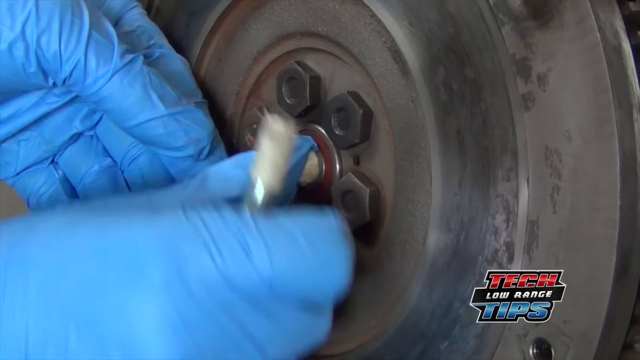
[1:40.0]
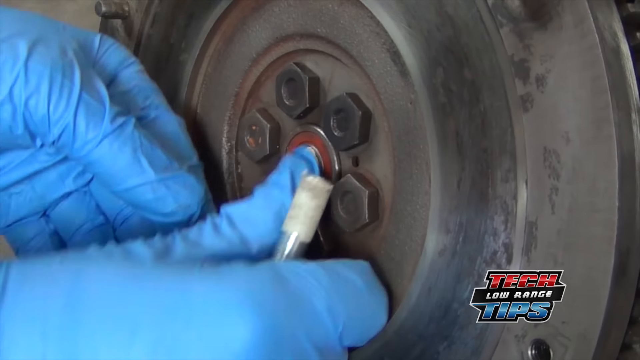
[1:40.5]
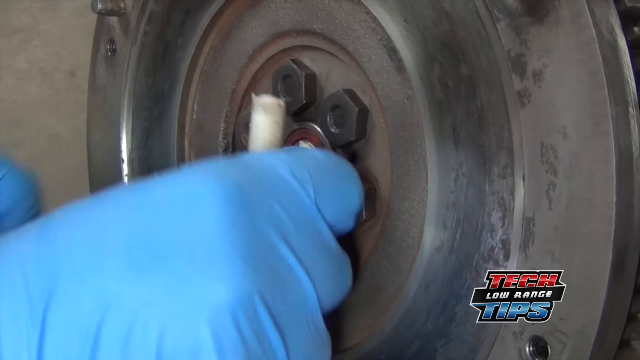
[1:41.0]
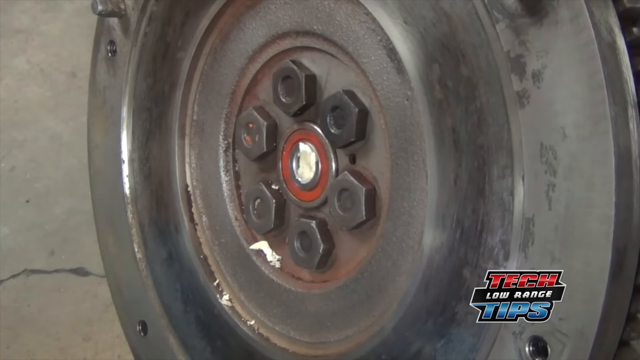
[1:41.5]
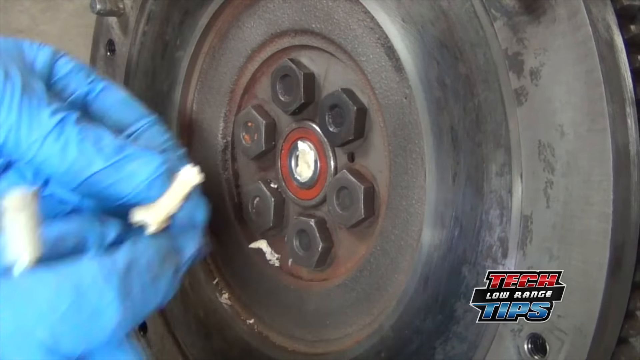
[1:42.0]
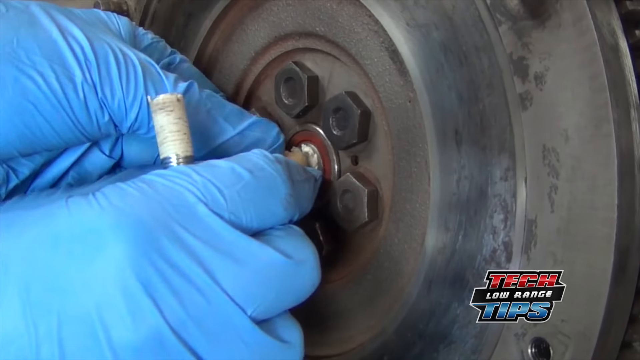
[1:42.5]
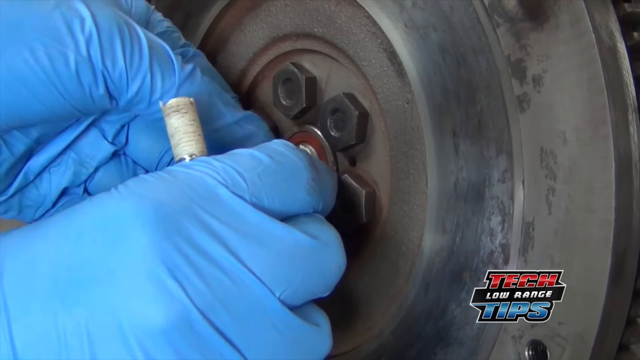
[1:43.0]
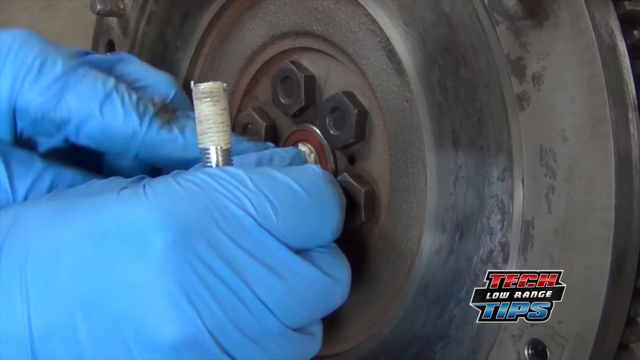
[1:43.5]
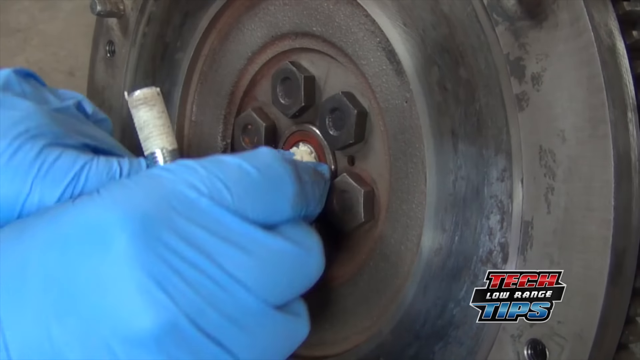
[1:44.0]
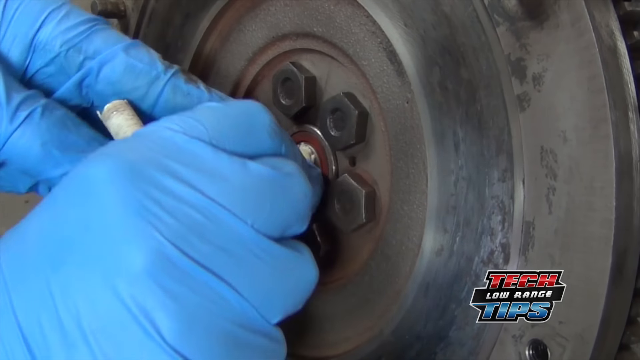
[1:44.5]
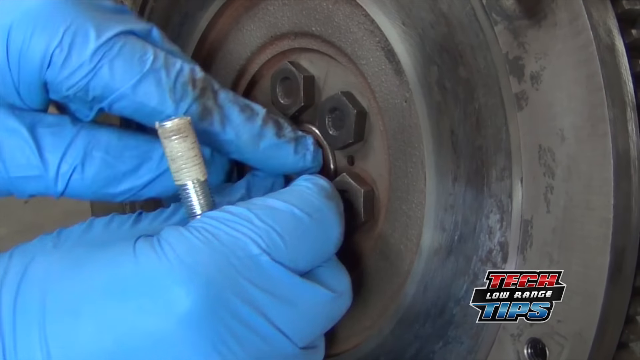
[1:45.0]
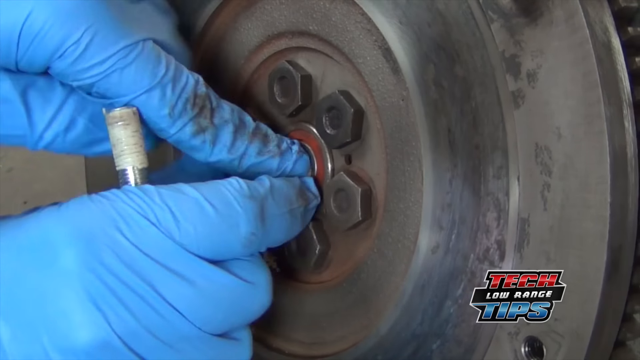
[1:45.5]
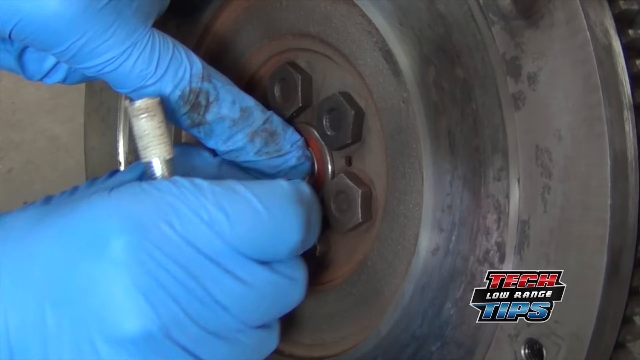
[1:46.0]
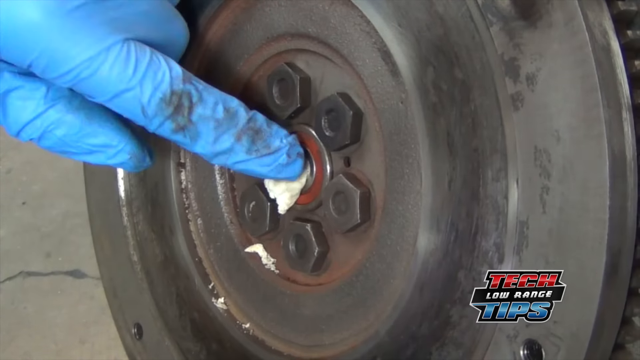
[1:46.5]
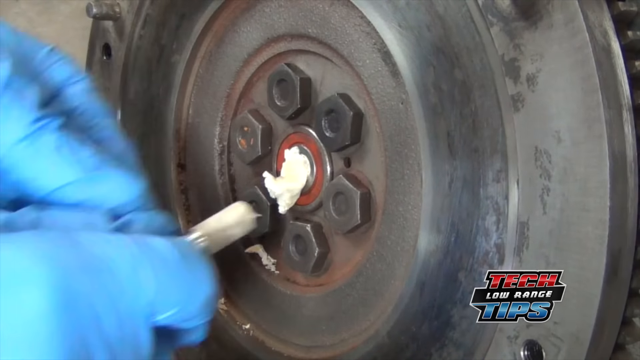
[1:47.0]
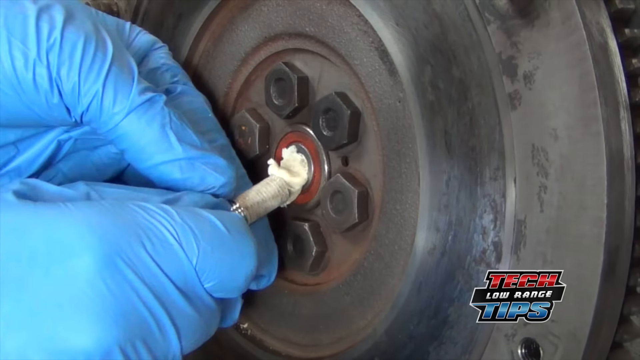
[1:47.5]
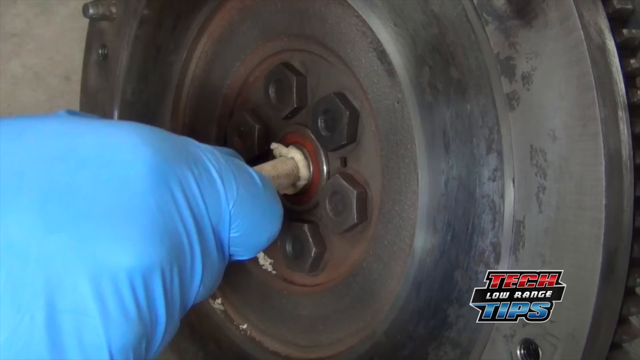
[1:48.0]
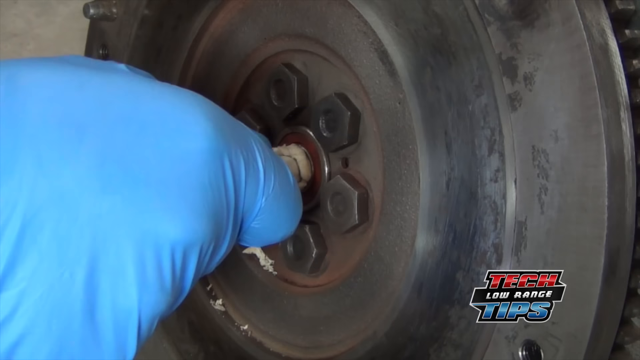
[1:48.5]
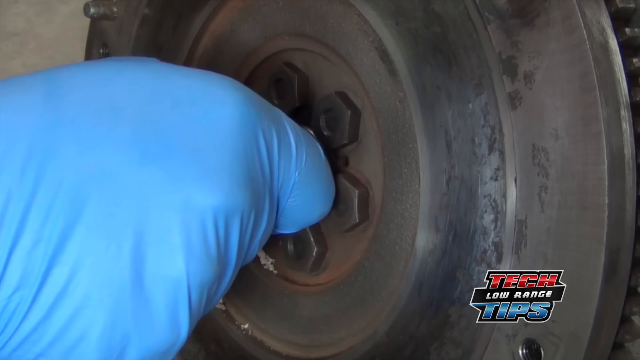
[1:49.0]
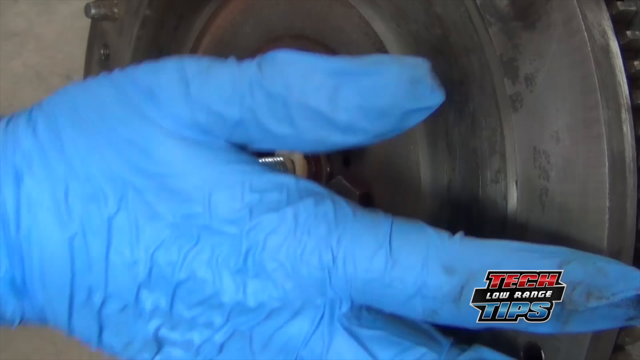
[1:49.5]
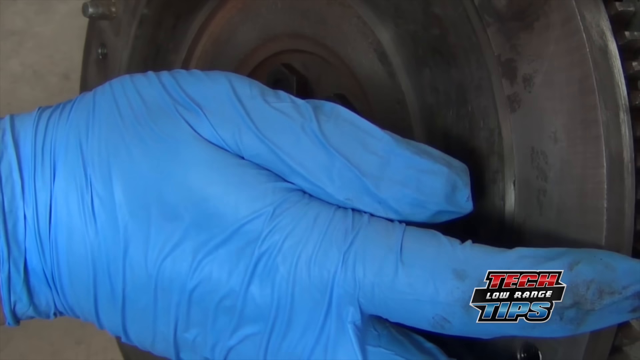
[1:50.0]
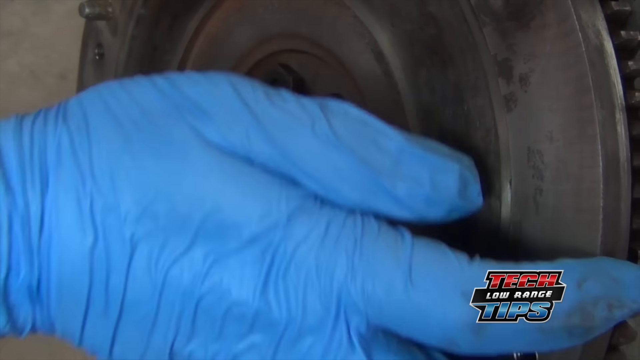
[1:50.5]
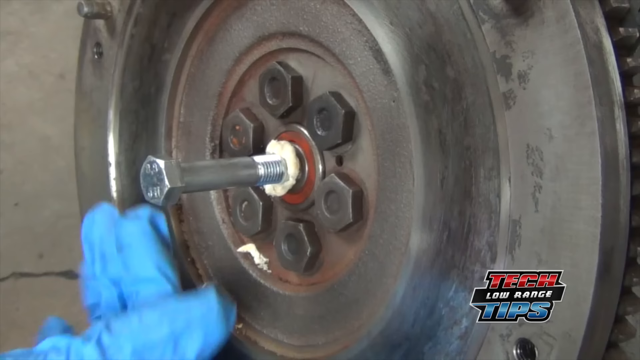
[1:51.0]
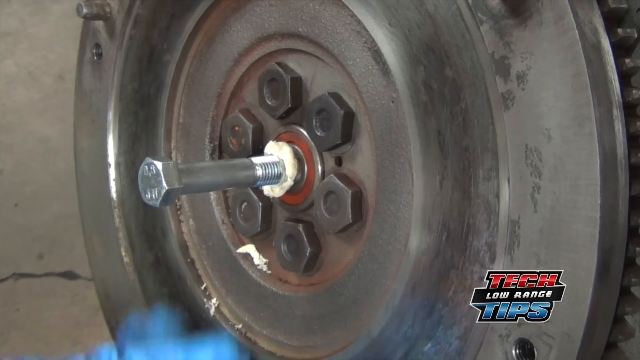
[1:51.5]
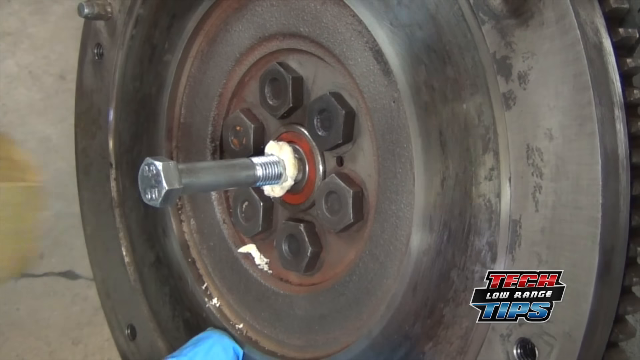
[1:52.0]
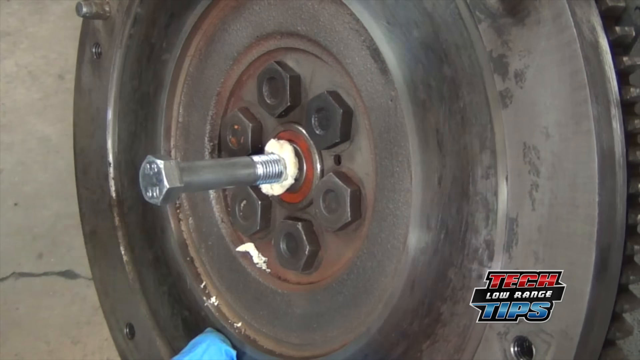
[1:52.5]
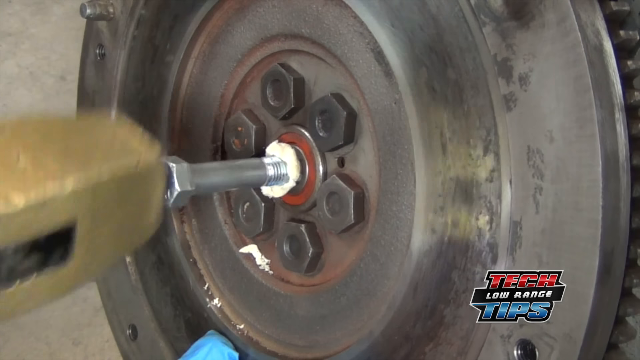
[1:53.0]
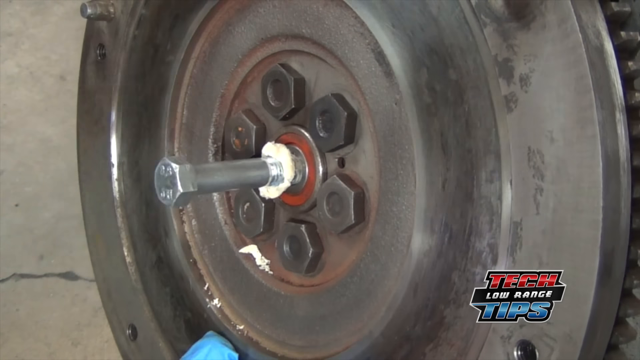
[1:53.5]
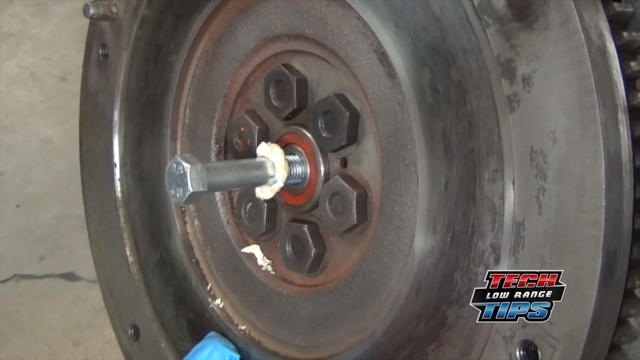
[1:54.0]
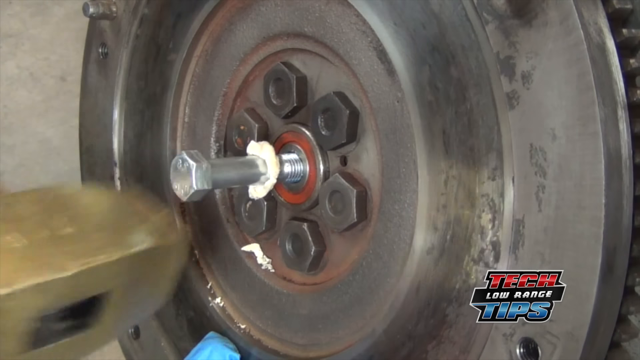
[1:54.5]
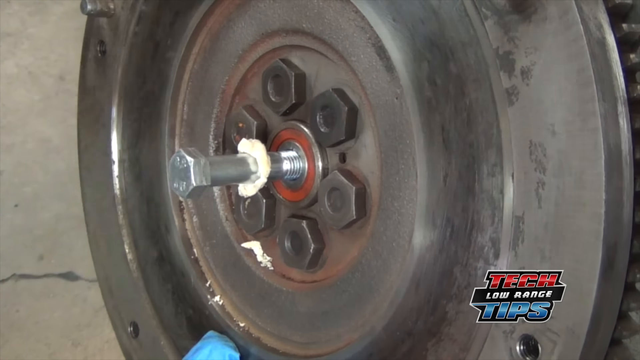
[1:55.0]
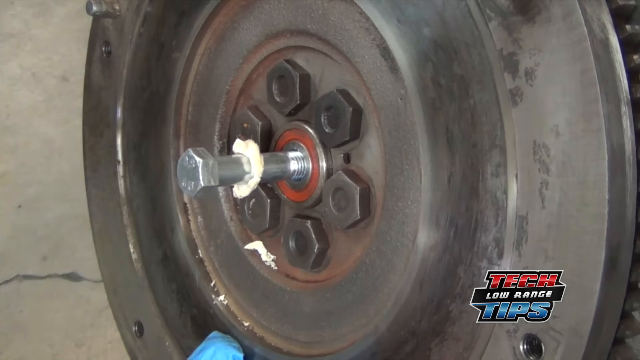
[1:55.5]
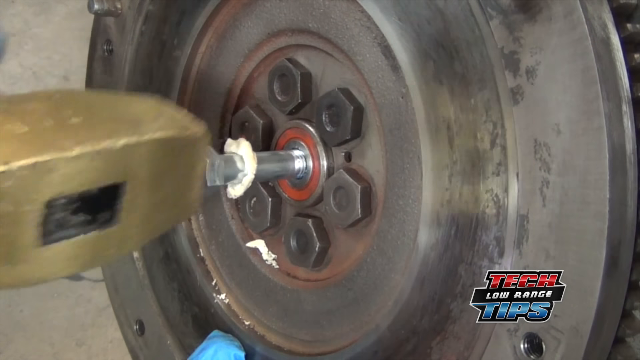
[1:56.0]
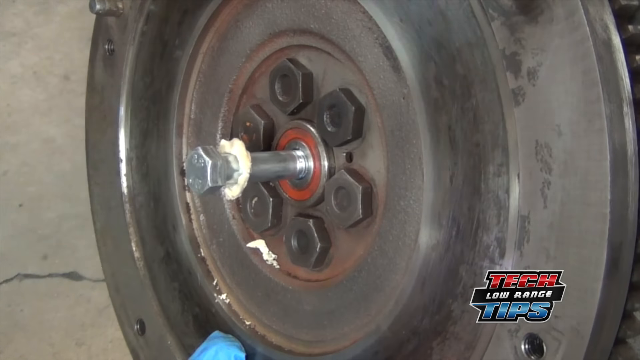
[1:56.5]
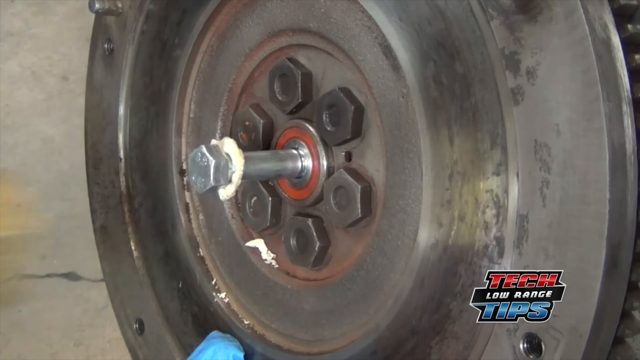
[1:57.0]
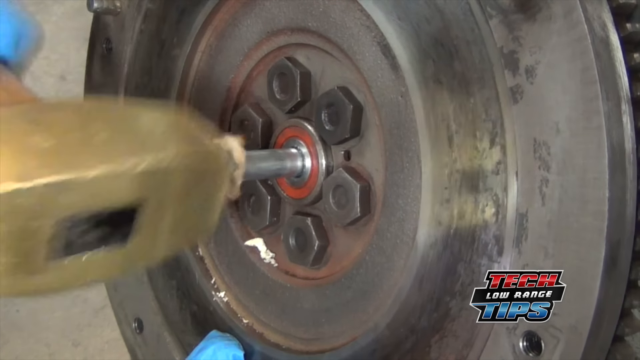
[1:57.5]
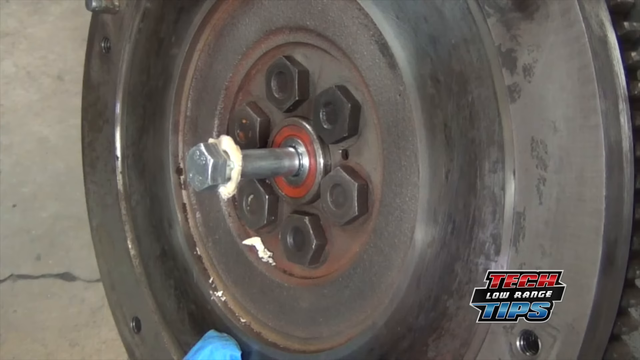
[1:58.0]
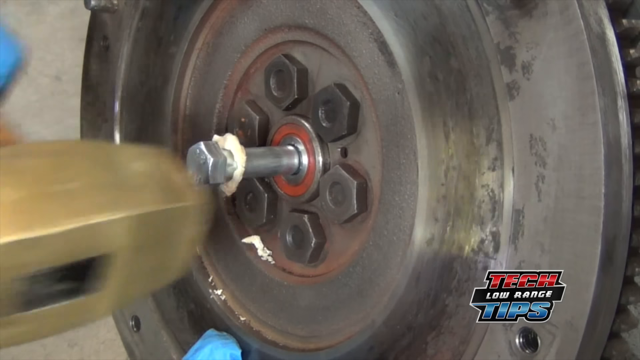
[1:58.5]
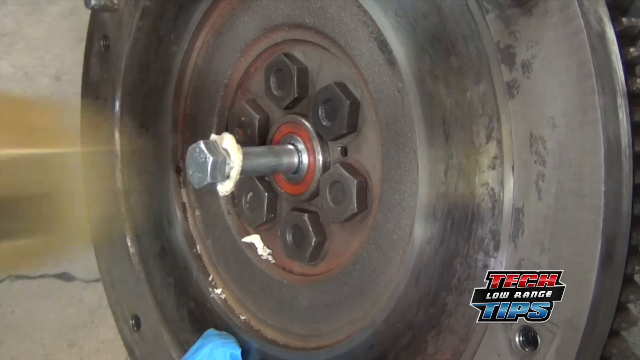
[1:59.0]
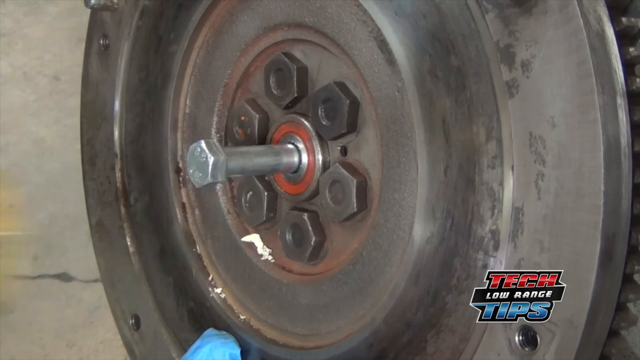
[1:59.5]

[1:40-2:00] The text "tech low range tips" appears. A man wearing blue gloves works on a rim-looking object. He presses some kind of putty or bread into the hole with his hand first, then uses a screw to push it further down, then takes a hammer and hammers the screw or nail to make the putty go deeper. The hammering does not make much of an effect, but he keeps hammering. The setting possibly looks like a mechanic shop.